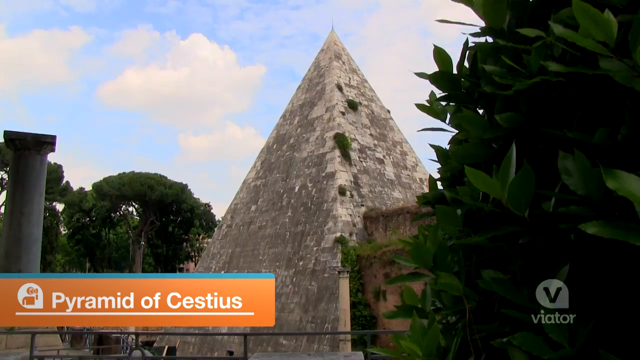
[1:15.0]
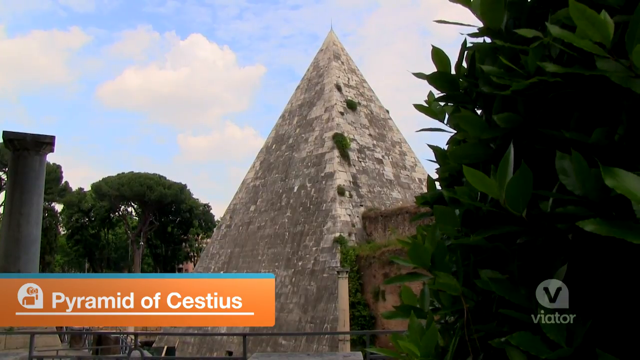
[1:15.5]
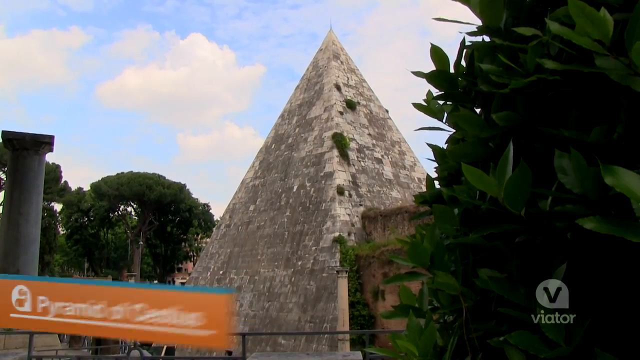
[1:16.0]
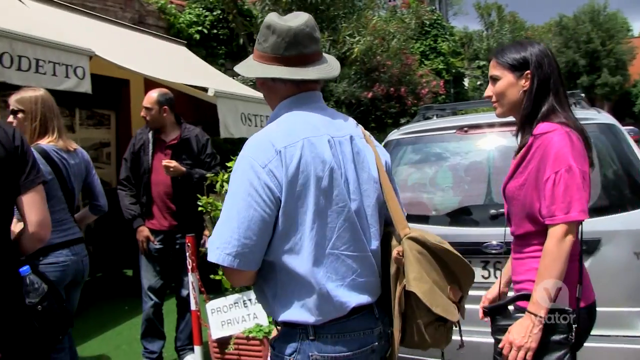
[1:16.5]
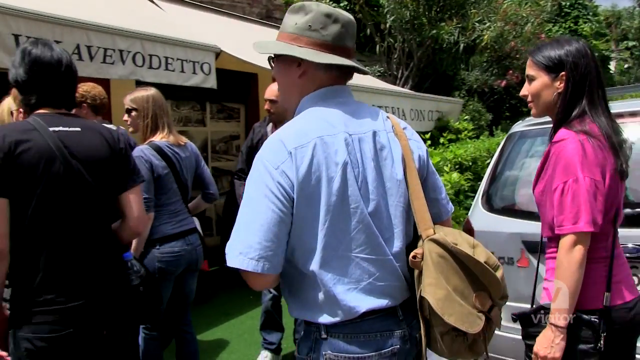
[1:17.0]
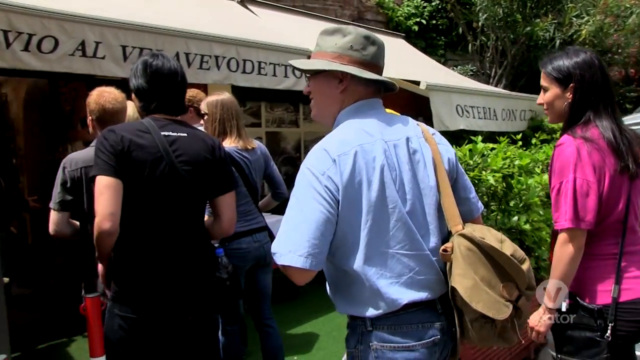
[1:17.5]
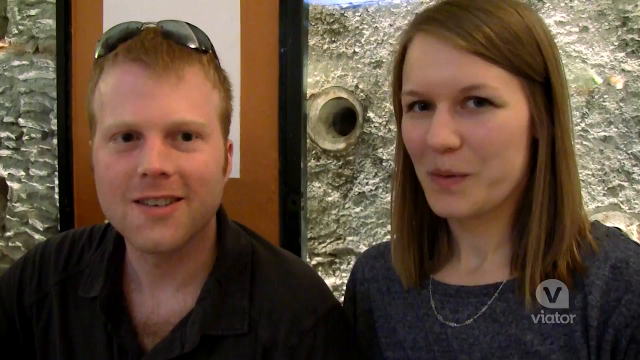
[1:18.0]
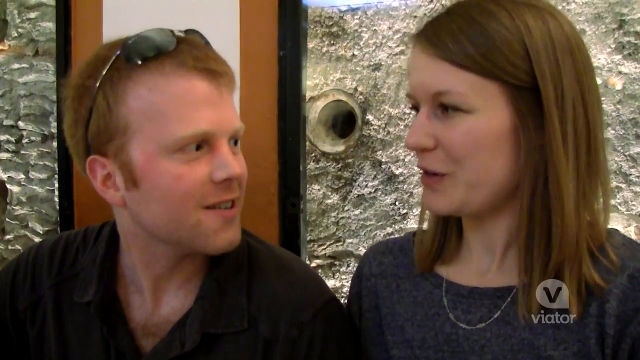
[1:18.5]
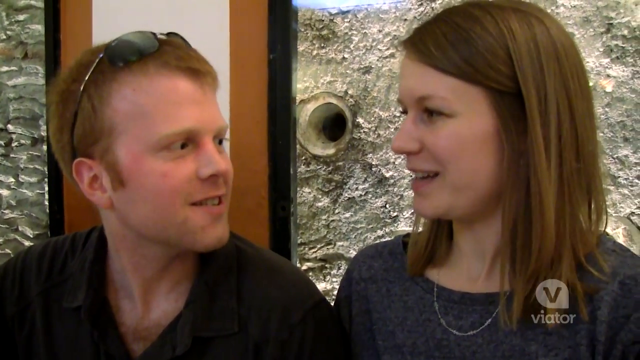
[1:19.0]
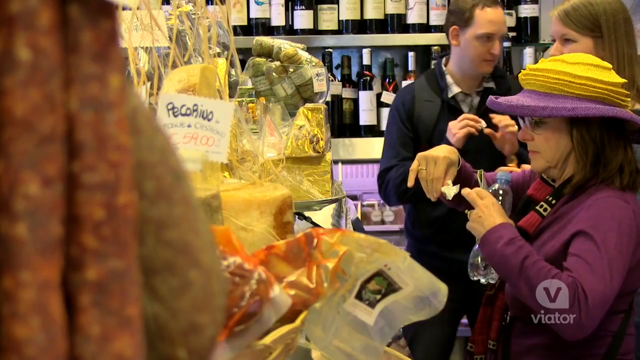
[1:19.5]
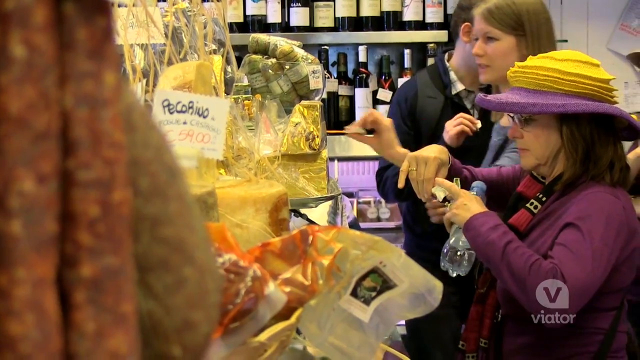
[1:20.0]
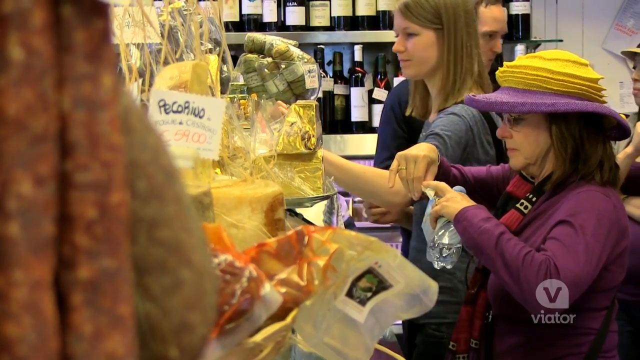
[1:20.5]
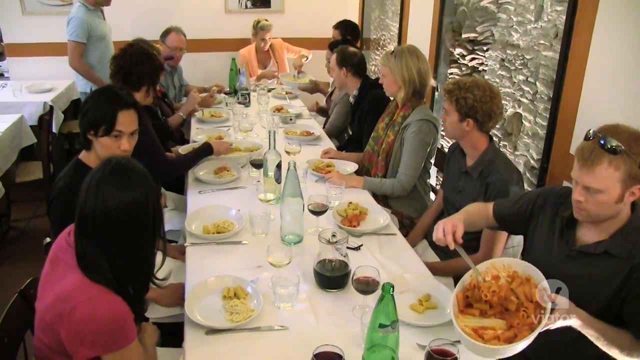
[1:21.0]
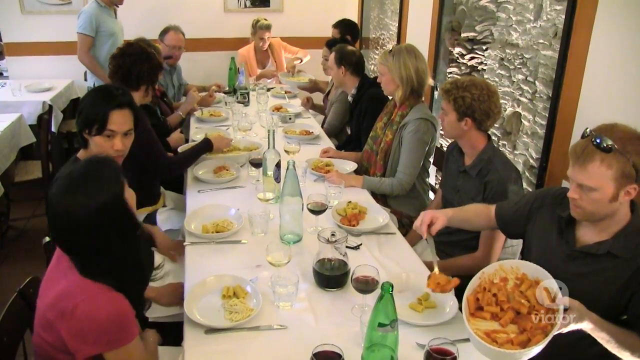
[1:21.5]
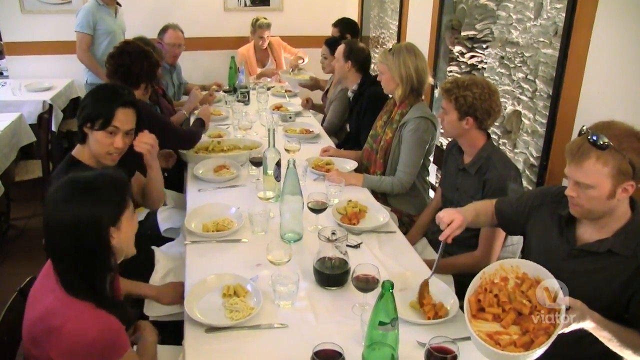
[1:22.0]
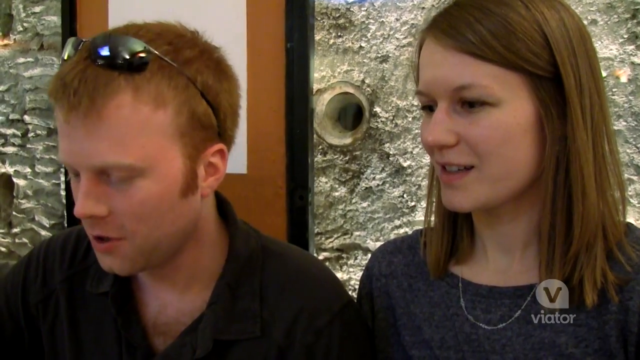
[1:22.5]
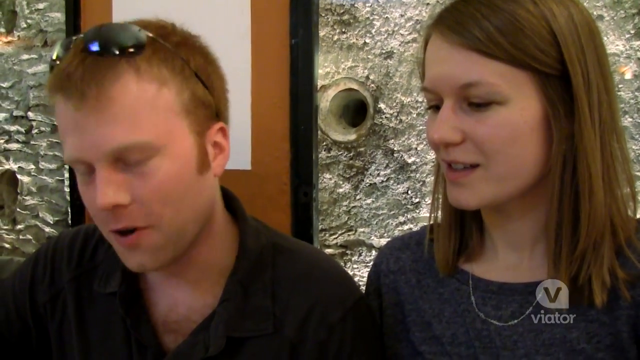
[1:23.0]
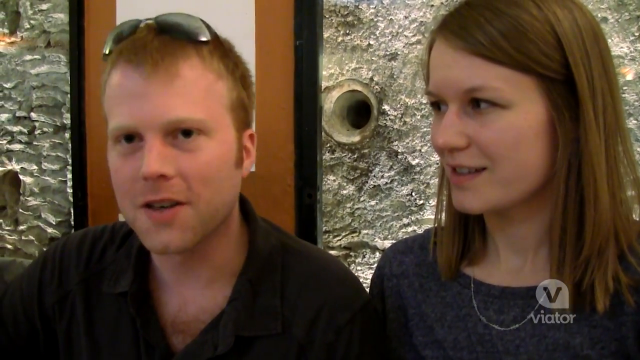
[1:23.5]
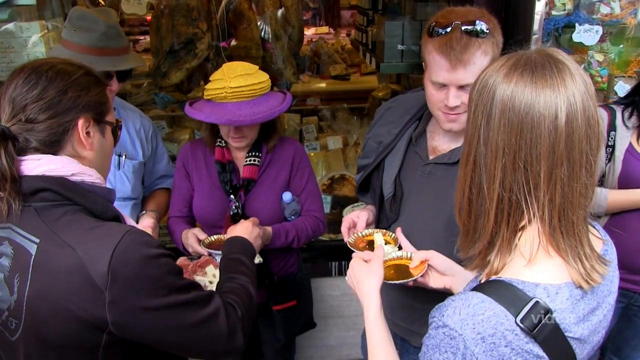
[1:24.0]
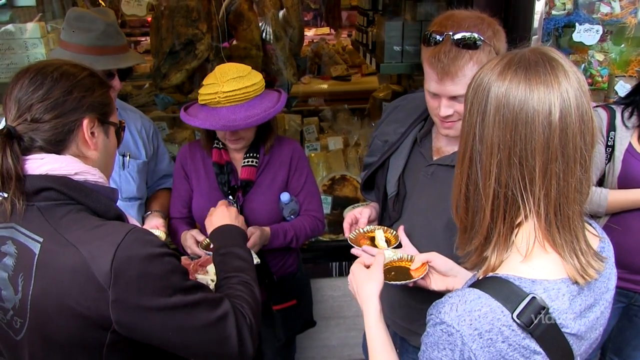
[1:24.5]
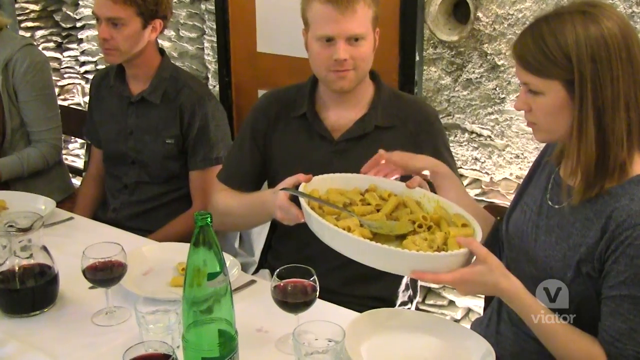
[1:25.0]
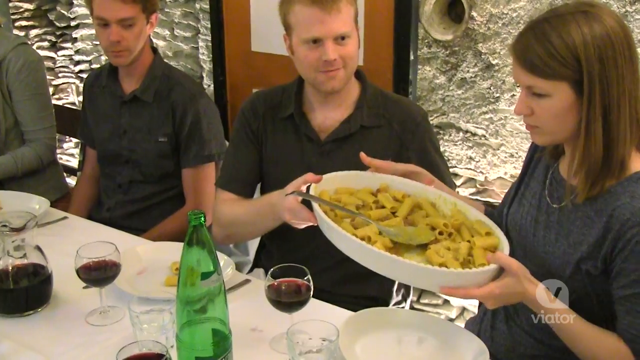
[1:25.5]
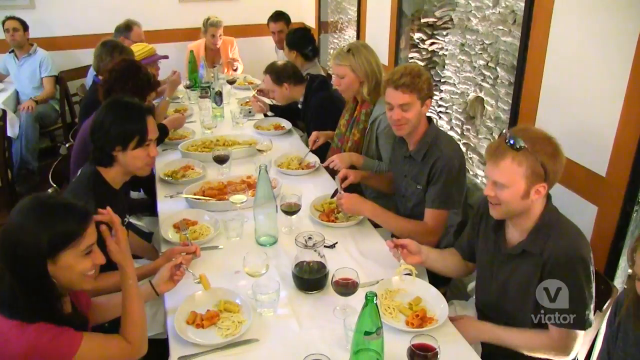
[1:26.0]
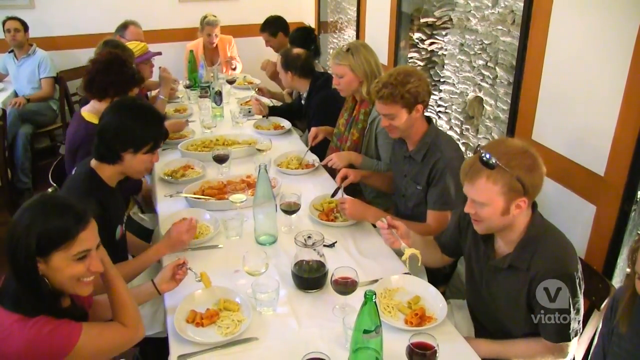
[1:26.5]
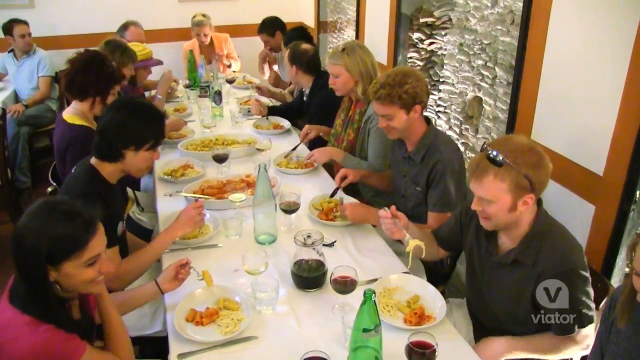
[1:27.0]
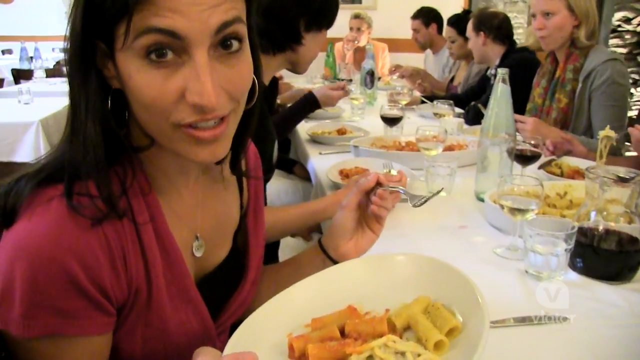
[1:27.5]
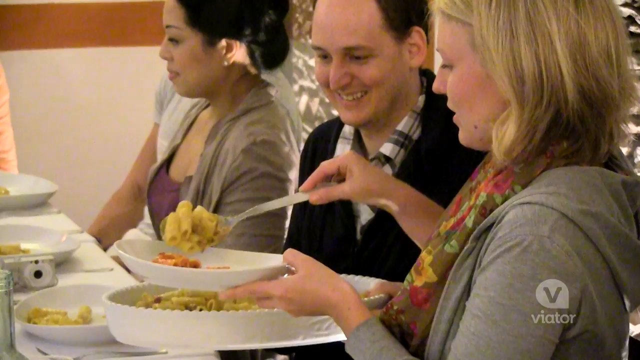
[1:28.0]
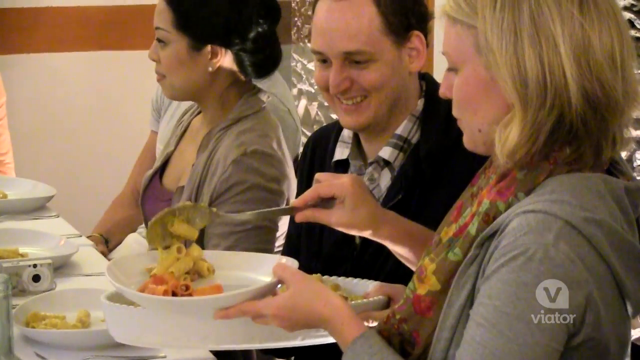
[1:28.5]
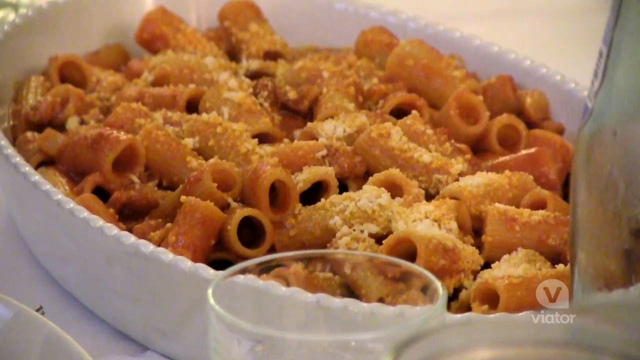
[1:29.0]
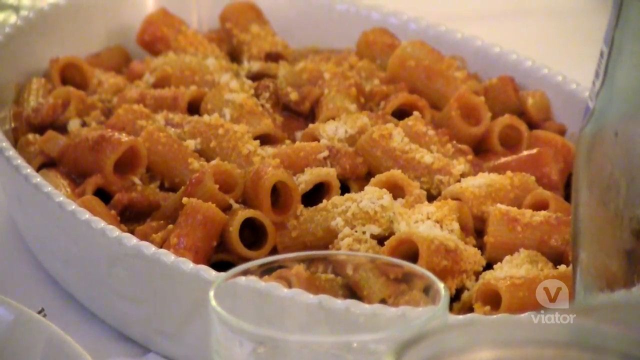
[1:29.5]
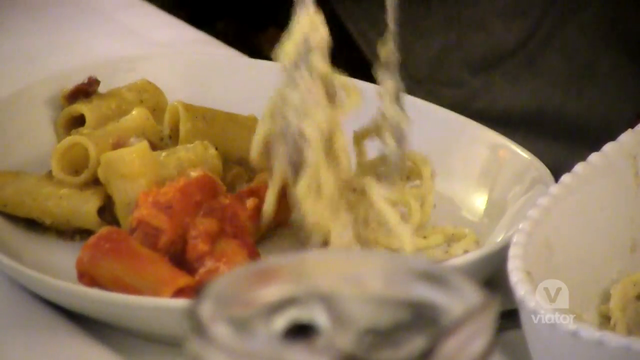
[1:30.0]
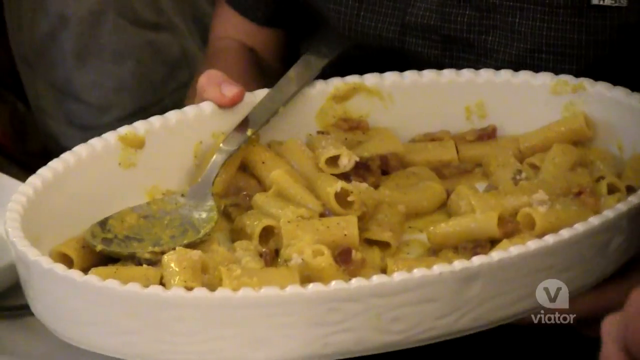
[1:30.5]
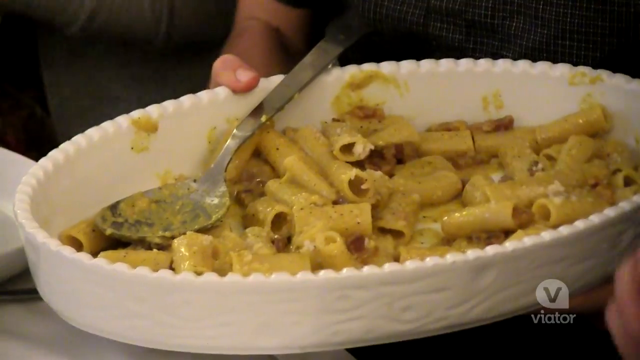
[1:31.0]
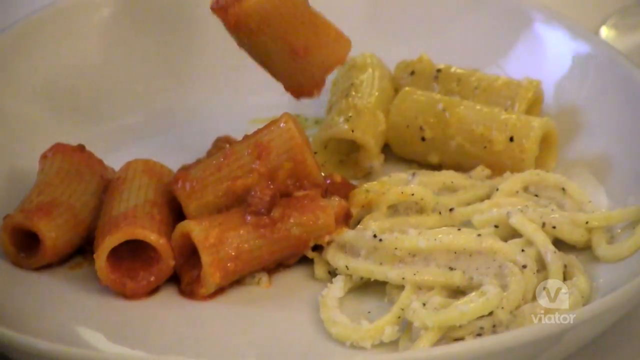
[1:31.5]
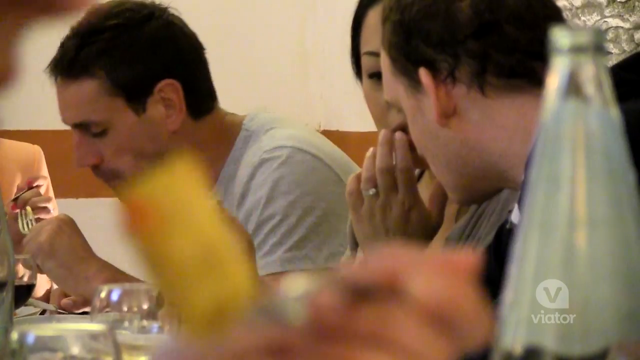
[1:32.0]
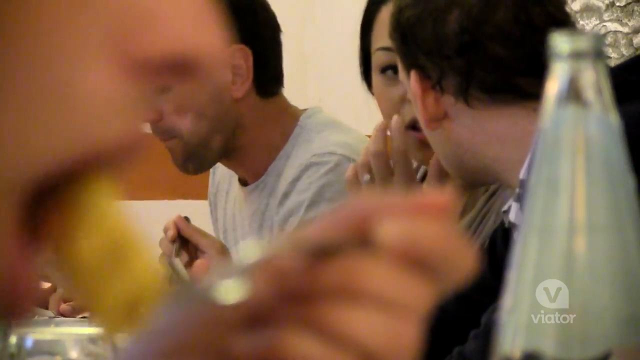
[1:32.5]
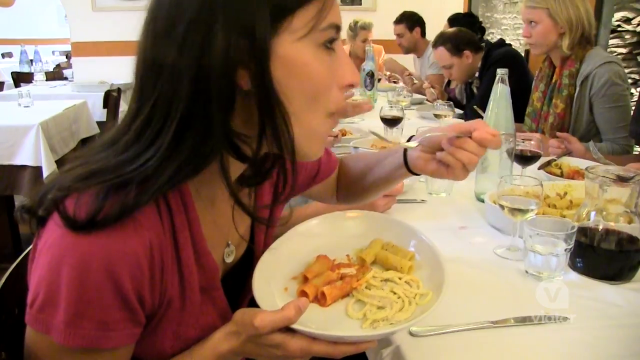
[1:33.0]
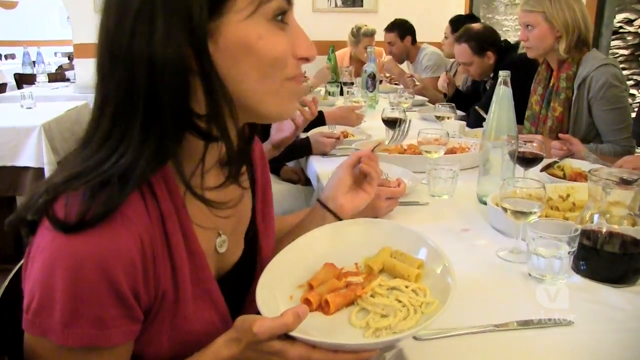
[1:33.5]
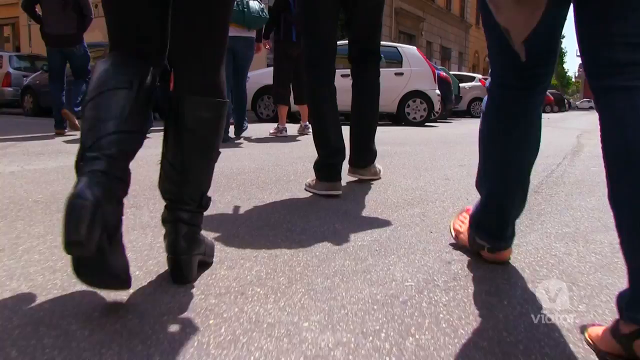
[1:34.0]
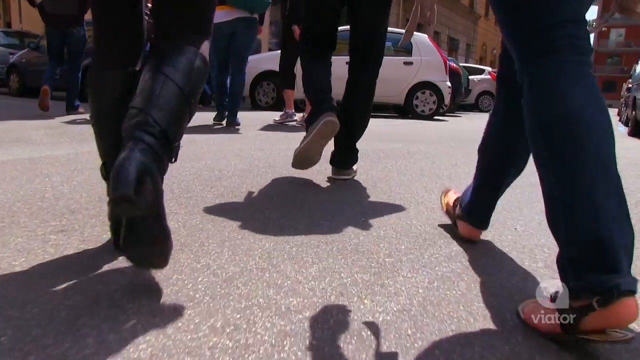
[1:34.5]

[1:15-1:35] The Rome walking tour appears to be walking up, with two people talking to each other. People sit at a long table covered in a white tablecloth, passing around dishes of food, serving themselves and eating; there seem to be different types of pasta. The scene moves to people walking around, then returns to the table, where large white ceramic oval dishes of pasta are passed around and people eat from round white ceramic plates. At least 12 people, possibly more, sit around the table. People then walk around, apparently heading to the cemetery tour. The walking food tour is shown with smoked sausages and dry smoked sausages hanging from the ceiling, and people eat and talk to each other. A couple, a man and a woman, appears; the man has red hair, sunglasses on top of his head and a gray polo shirt.